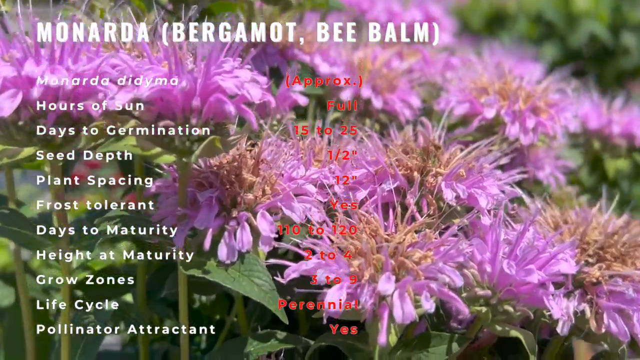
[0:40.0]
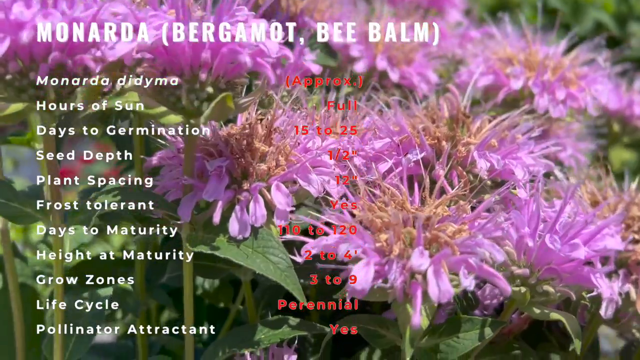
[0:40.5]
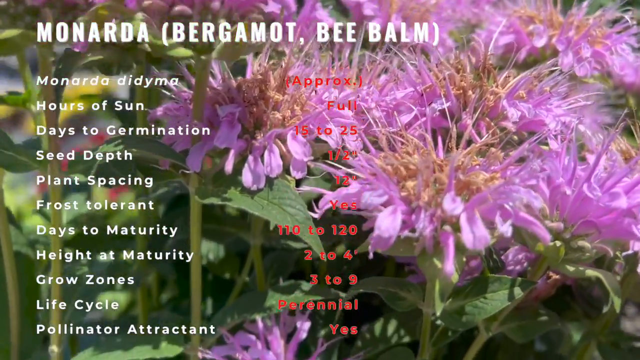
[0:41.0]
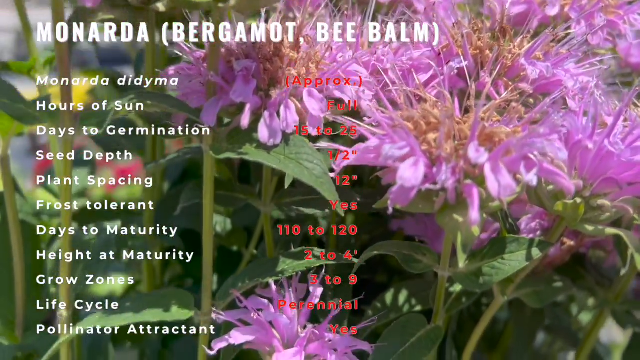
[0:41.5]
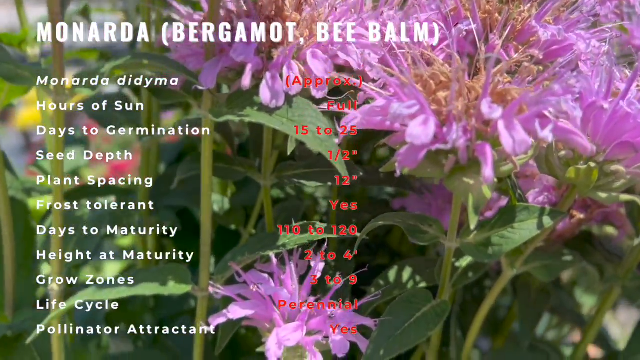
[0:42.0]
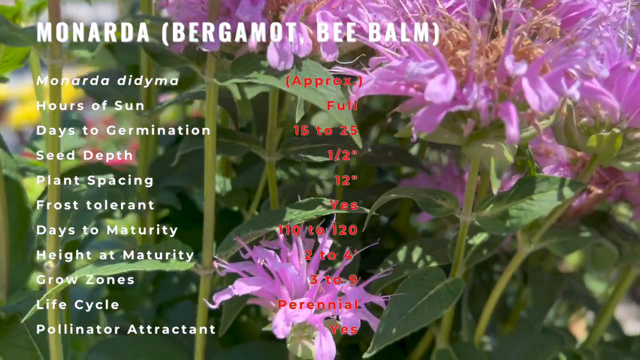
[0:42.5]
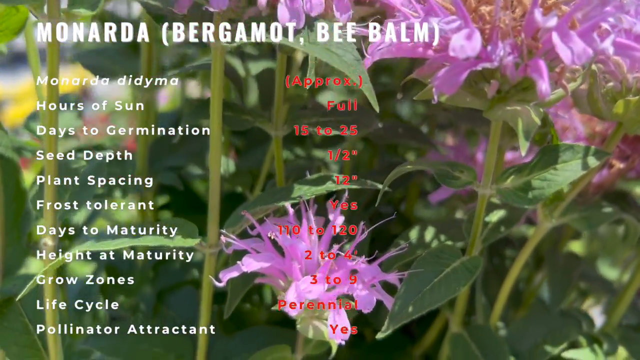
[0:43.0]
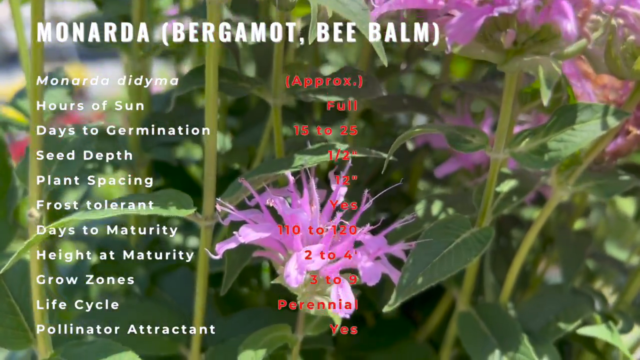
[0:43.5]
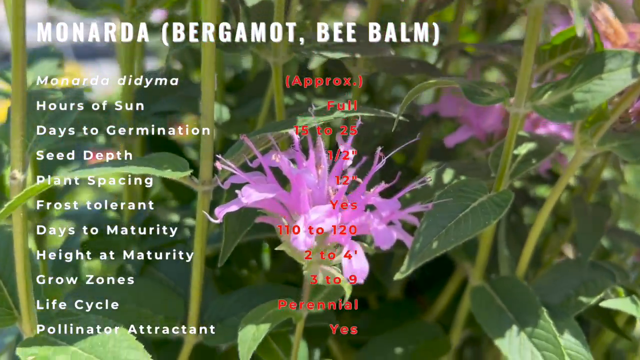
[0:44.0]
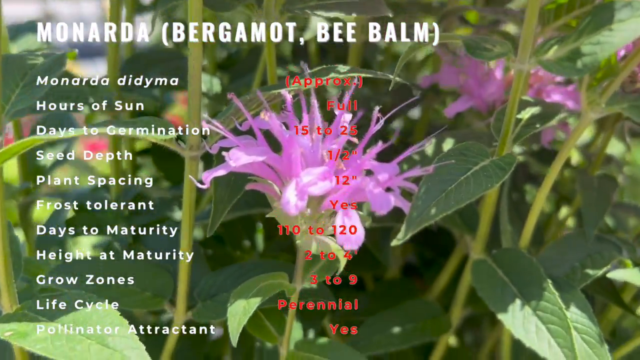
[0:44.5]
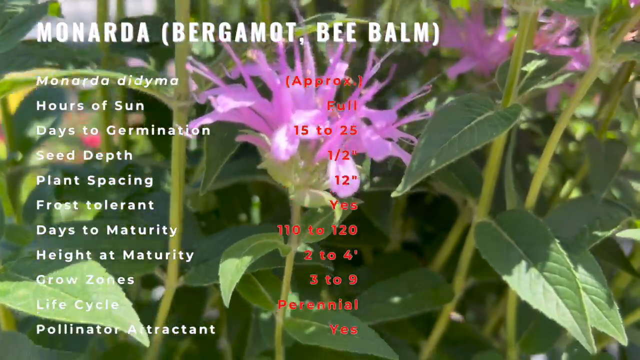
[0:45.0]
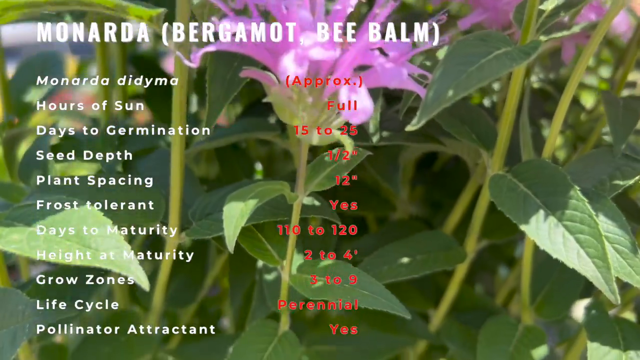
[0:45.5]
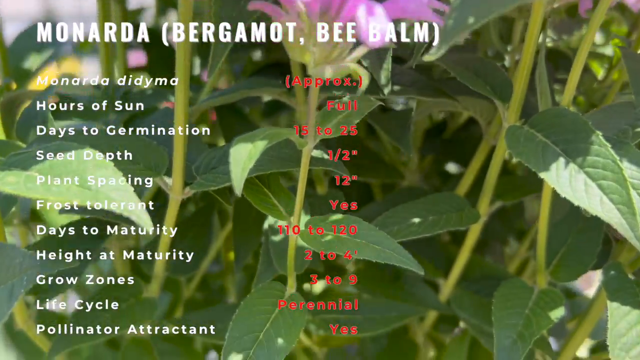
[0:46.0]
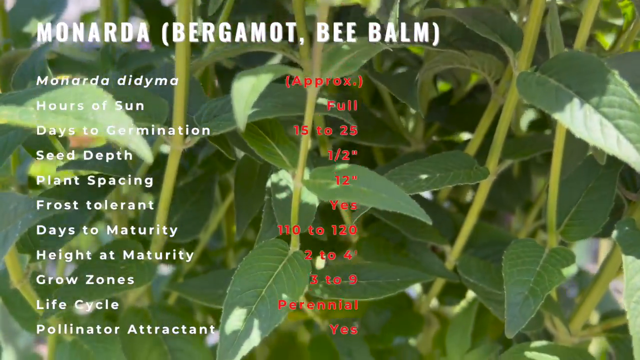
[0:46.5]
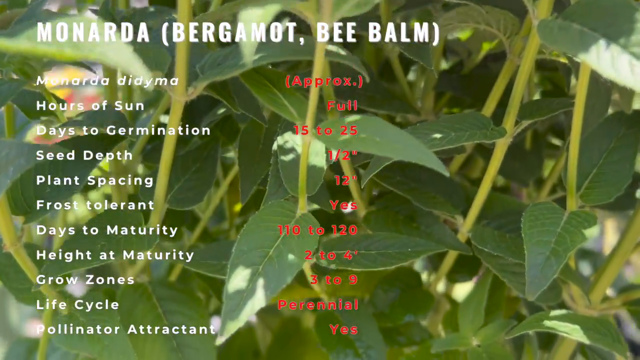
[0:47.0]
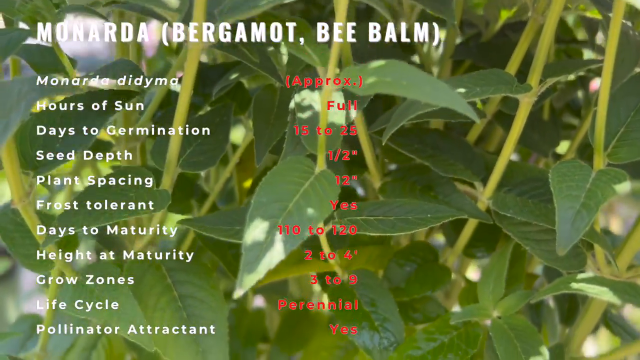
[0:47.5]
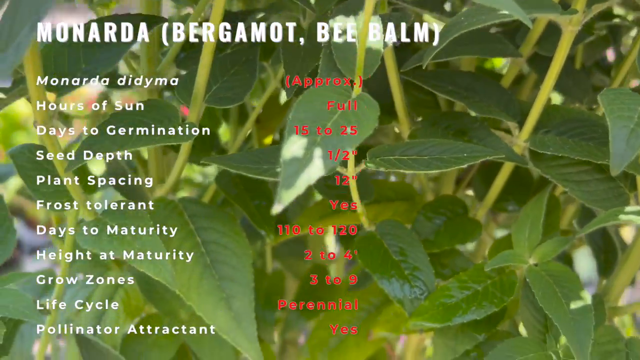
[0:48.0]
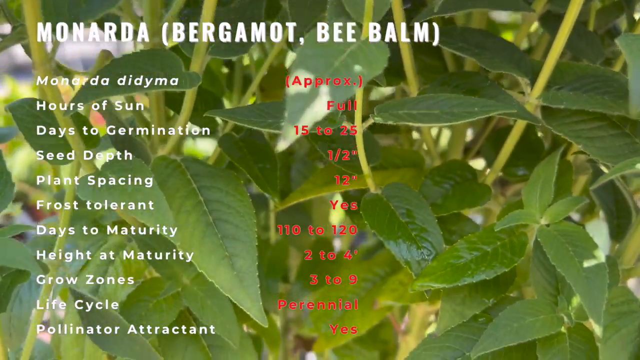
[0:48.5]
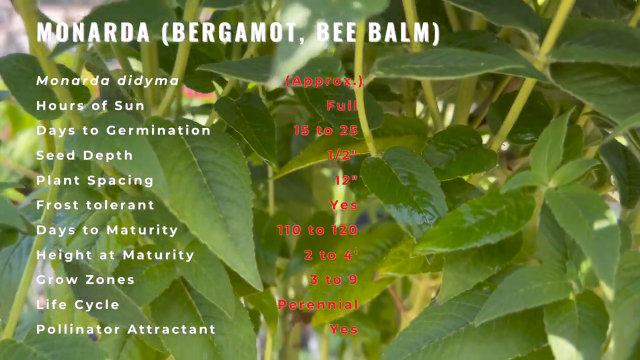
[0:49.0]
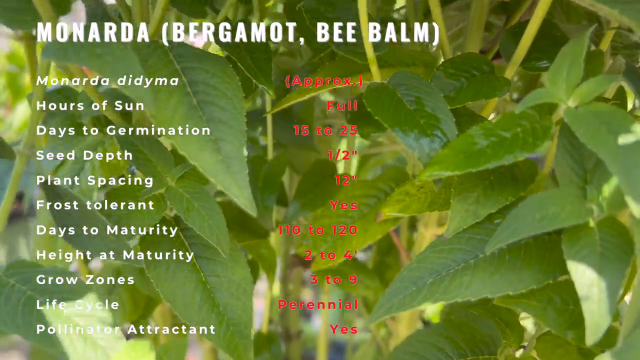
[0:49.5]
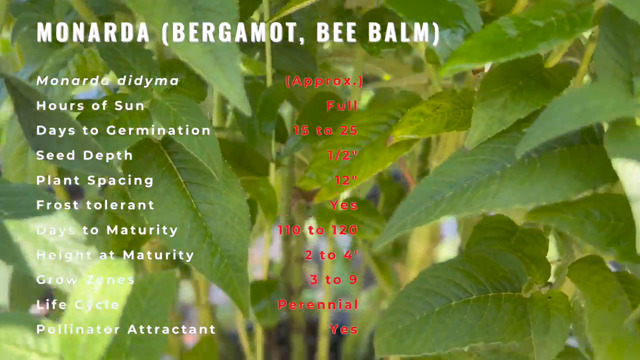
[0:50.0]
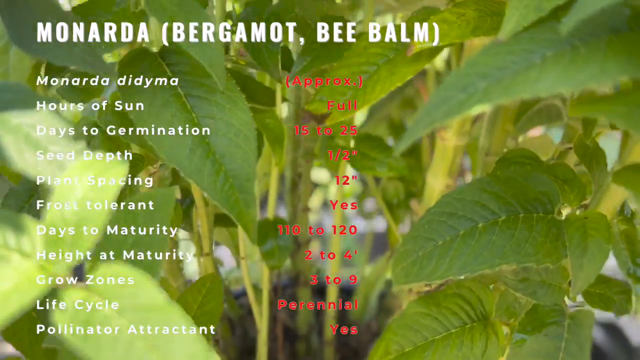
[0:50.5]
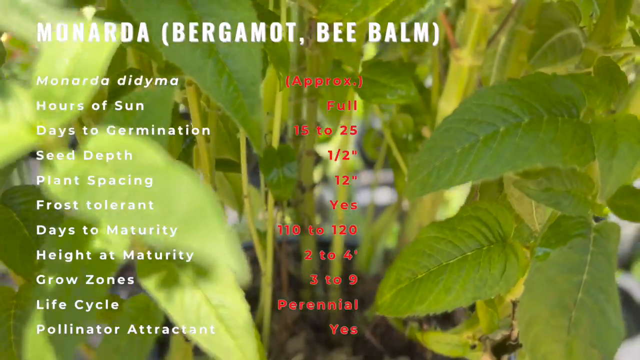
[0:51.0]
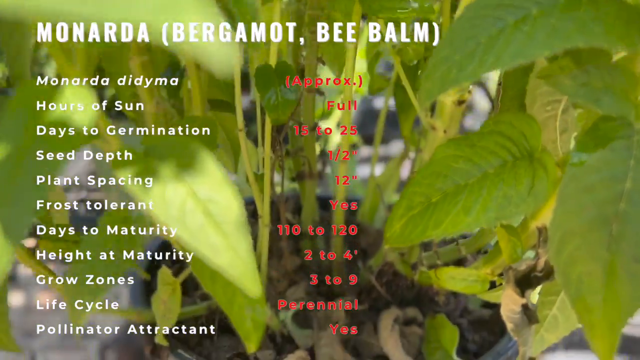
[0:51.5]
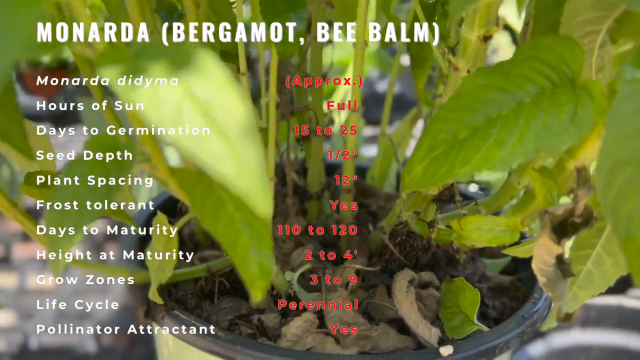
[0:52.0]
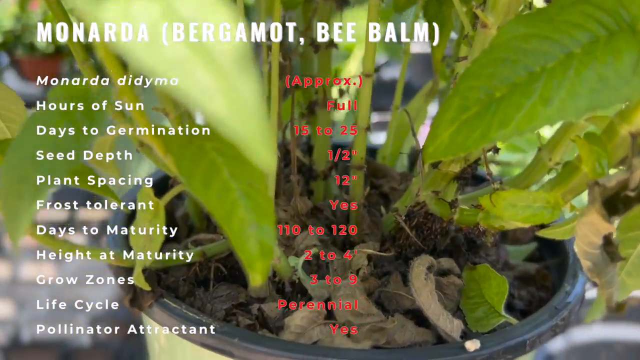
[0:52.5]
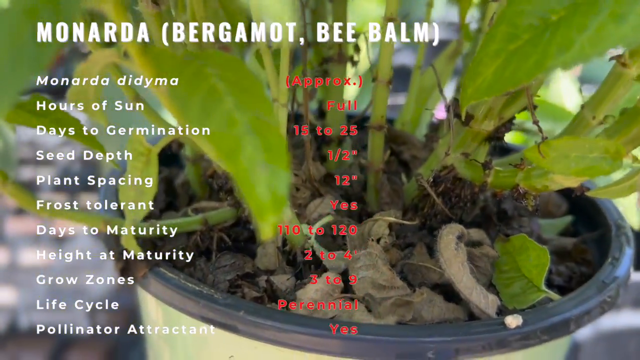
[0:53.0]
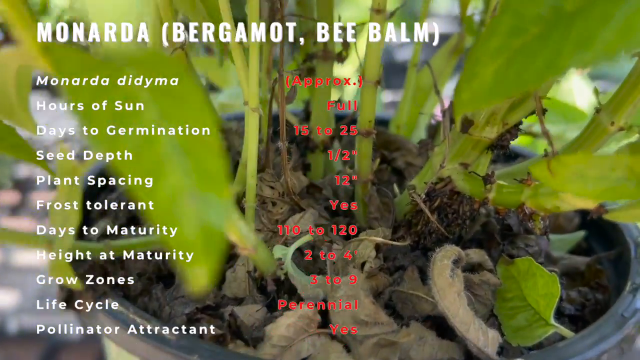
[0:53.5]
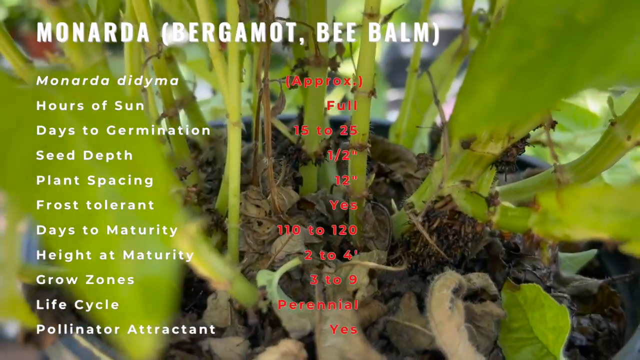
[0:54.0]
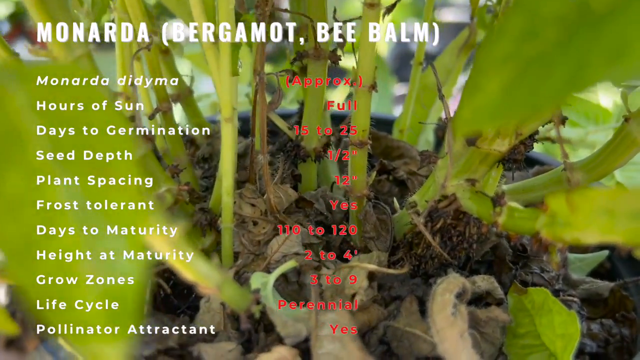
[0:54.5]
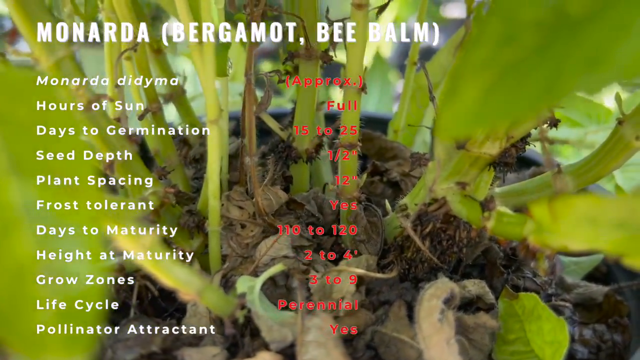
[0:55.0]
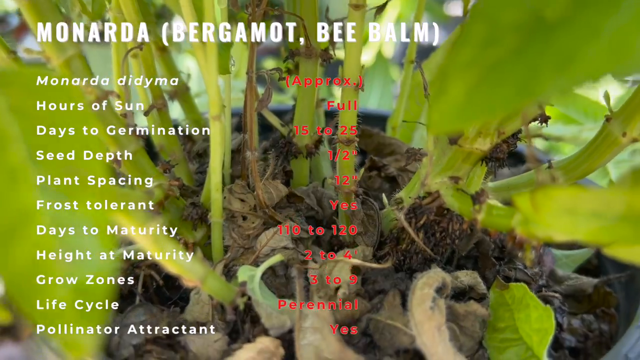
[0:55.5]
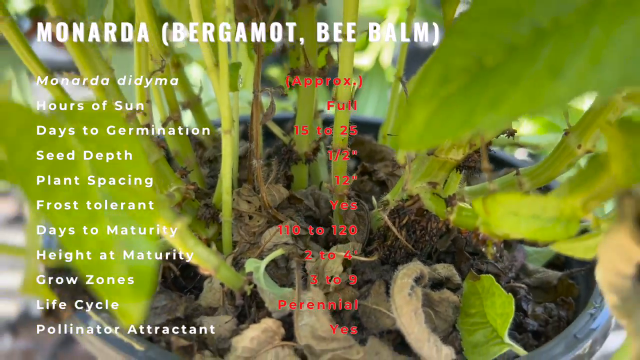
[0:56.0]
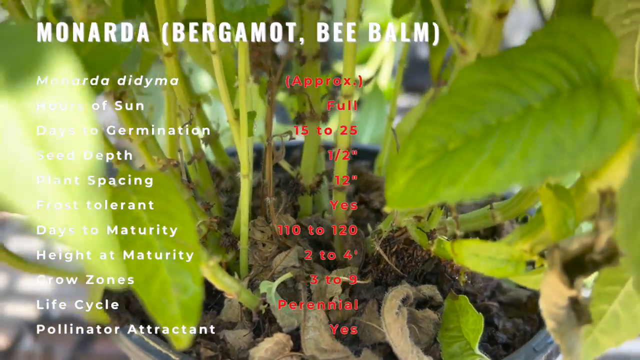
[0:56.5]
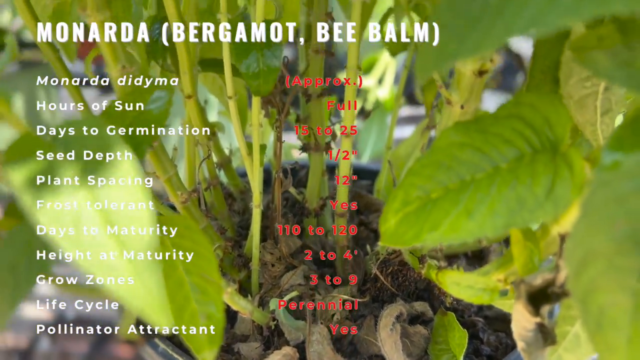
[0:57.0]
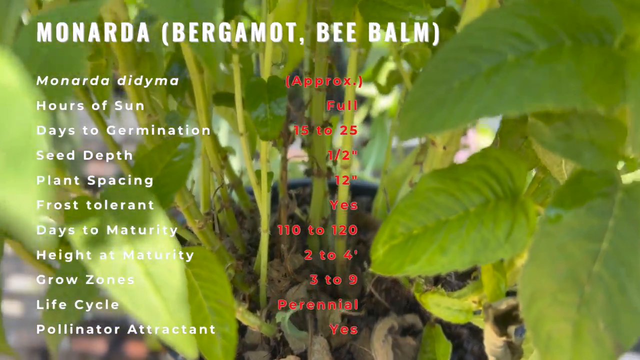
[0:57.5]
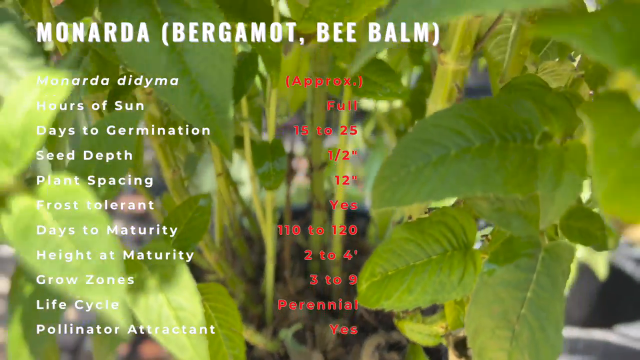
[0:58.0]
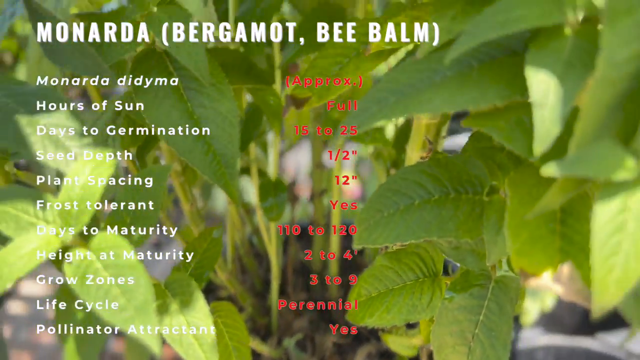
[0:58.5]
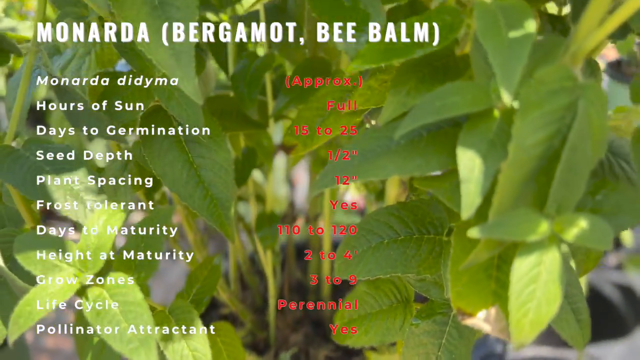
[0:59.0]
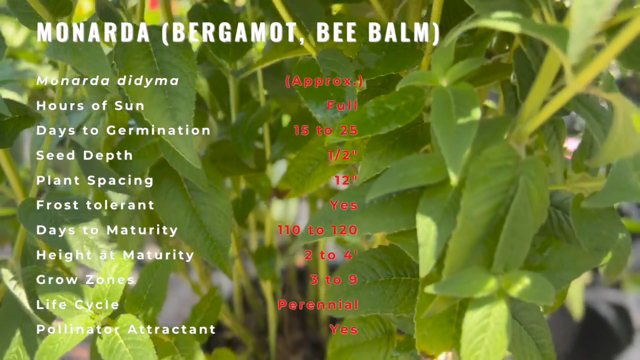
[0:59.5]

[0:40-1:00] A plant has purple or violet flowers, stems and kind of small green leaves. The violet flowers' petals are also kind of small but clustered, with little twigs sticking out of them that are also kind of violet. The camera pans down to show that the plant is growing out of a black pot, with a lot of vines coming out of the pot. Some of the flowers are getting older, and their middle parts are drying out and starting to look brown. In the forefront is a list of the plant's characteristics, with the plant's name at the top: "Monarda", also called "Bee Balm". The list includes seed depth and hours of sun.